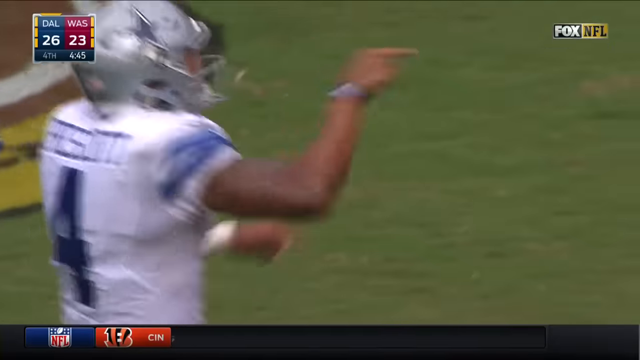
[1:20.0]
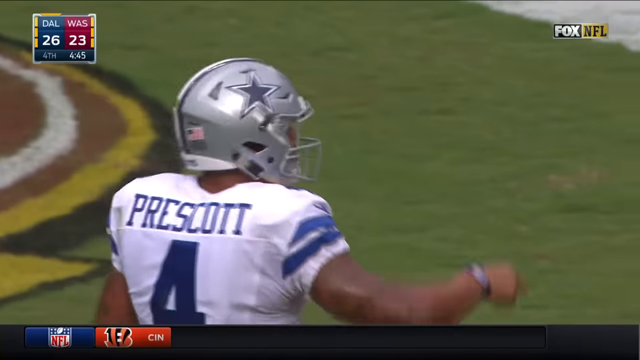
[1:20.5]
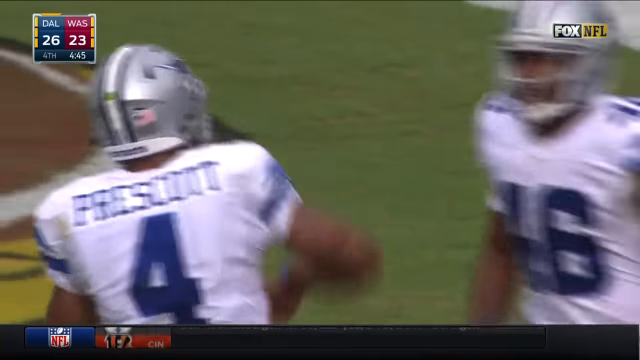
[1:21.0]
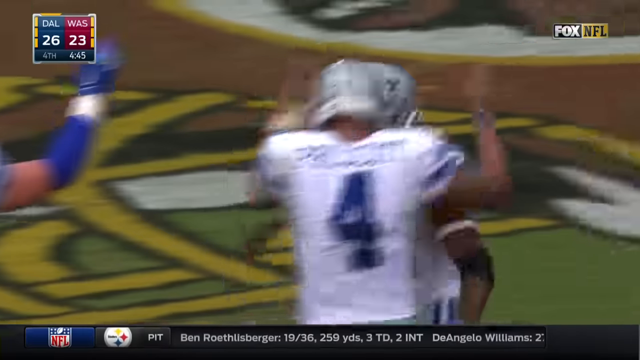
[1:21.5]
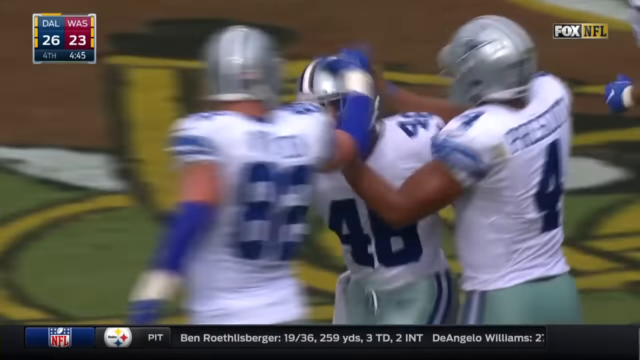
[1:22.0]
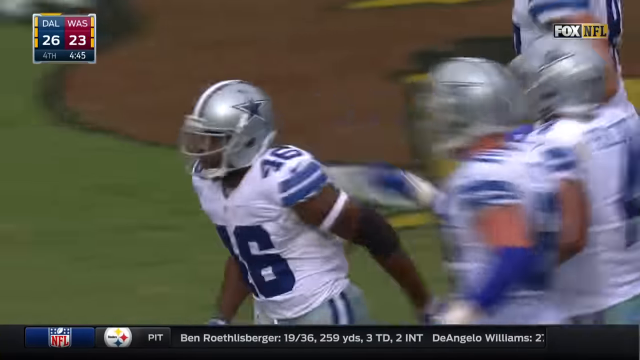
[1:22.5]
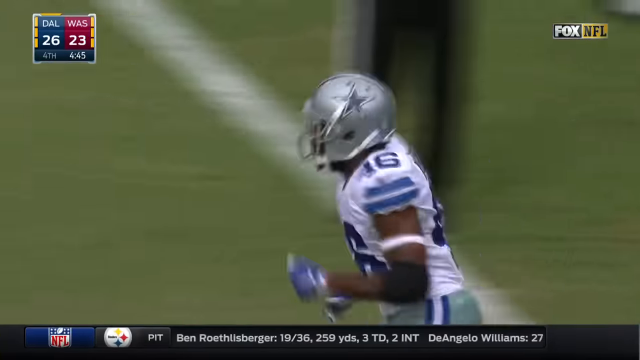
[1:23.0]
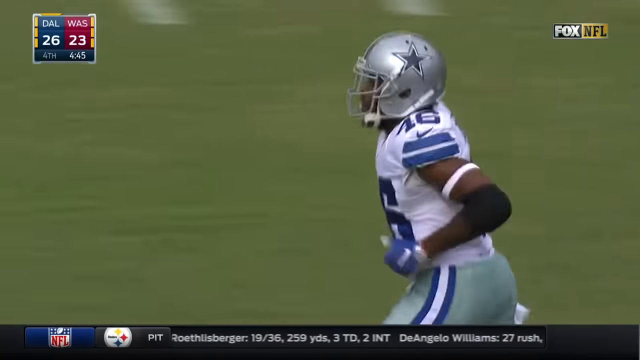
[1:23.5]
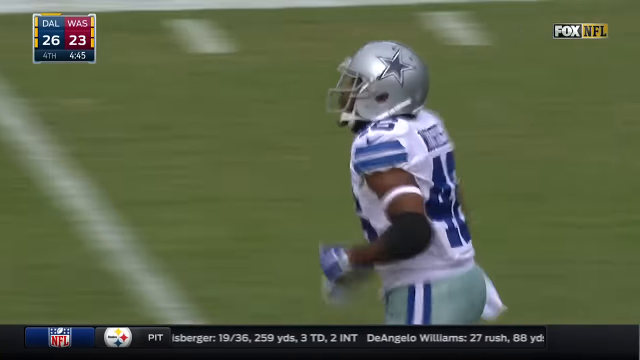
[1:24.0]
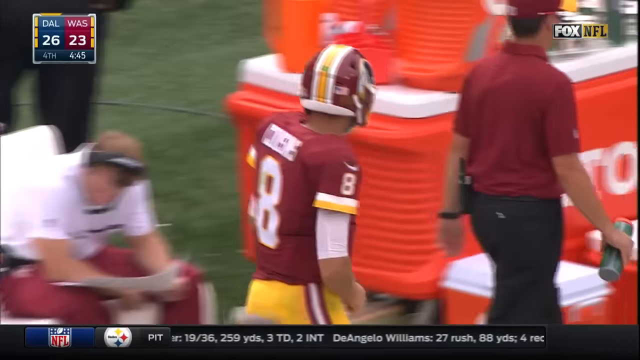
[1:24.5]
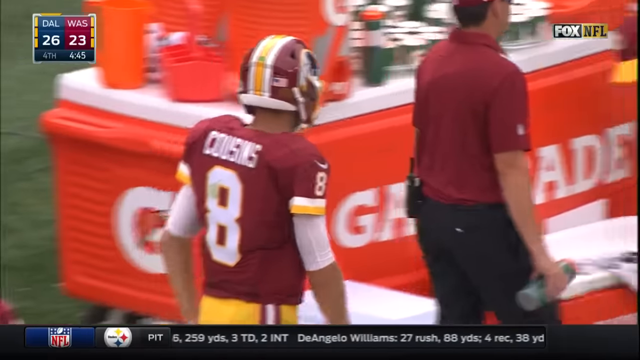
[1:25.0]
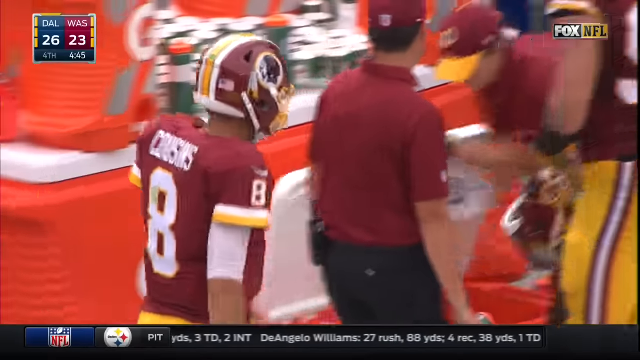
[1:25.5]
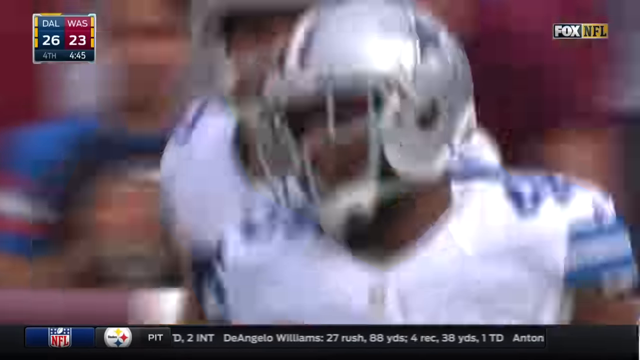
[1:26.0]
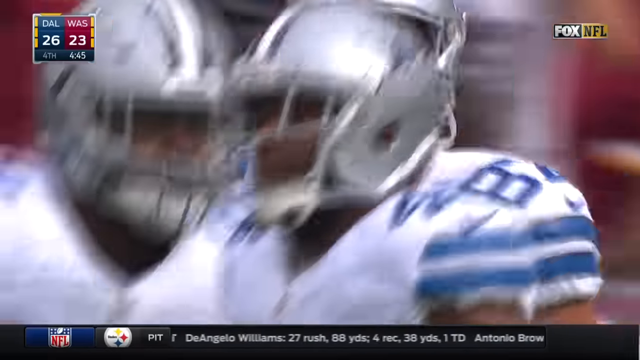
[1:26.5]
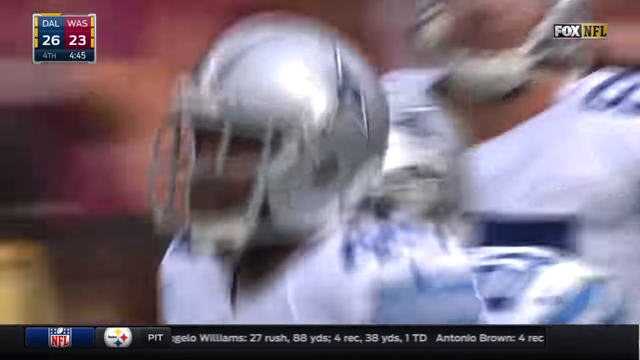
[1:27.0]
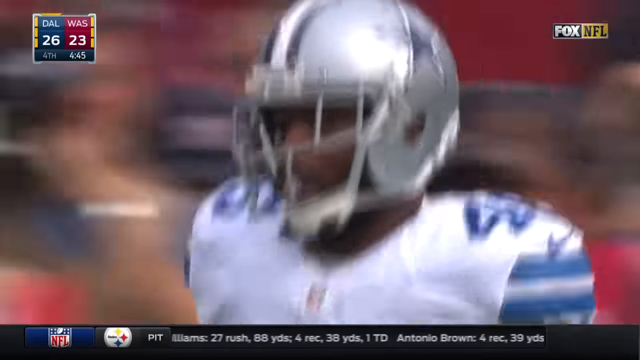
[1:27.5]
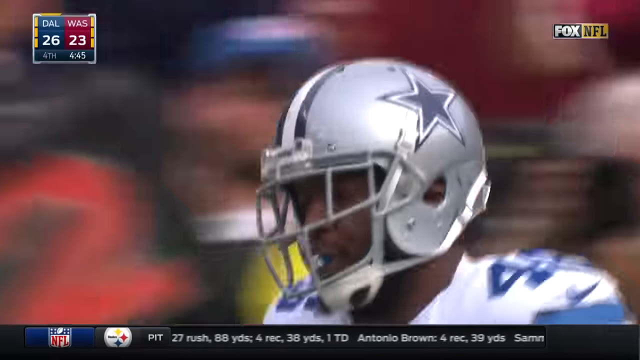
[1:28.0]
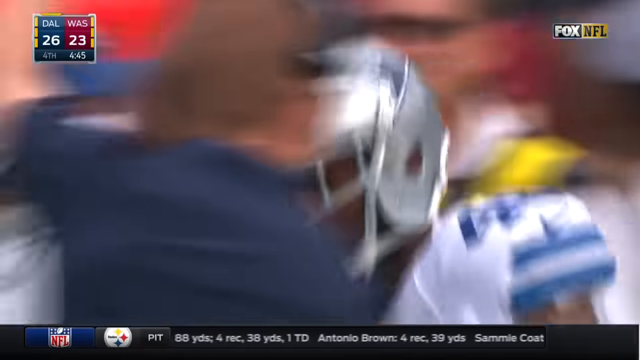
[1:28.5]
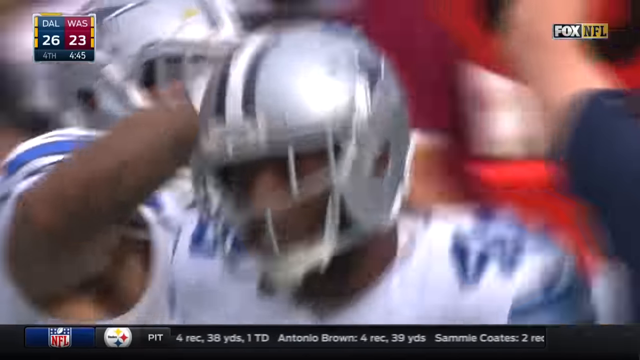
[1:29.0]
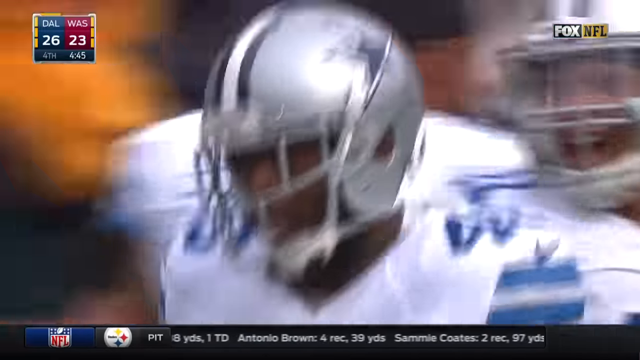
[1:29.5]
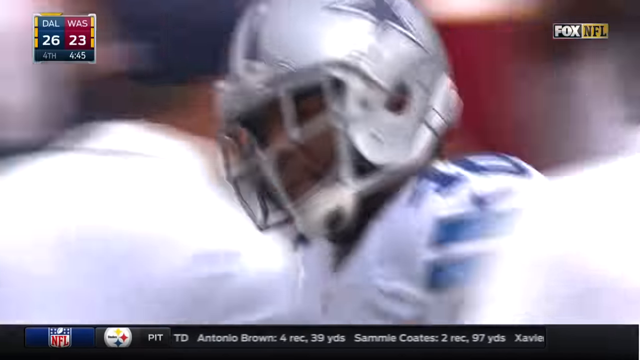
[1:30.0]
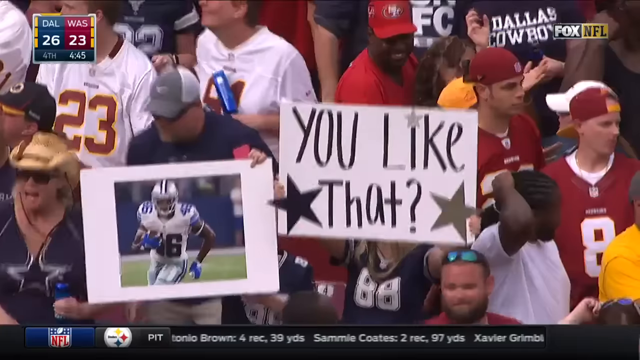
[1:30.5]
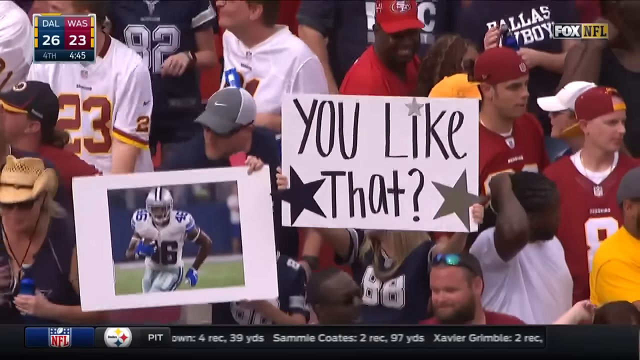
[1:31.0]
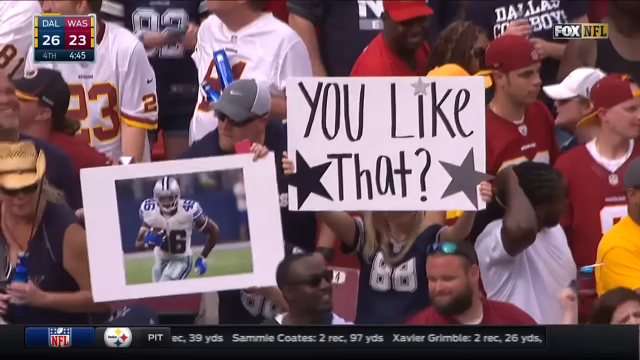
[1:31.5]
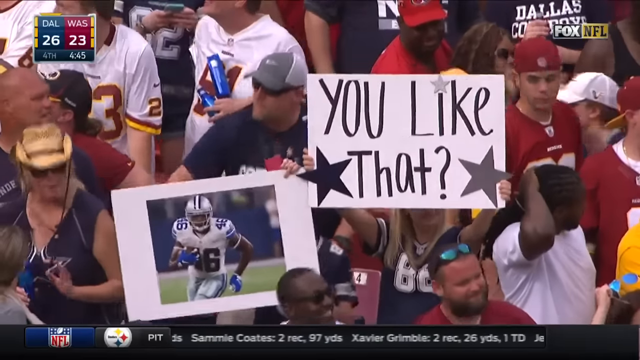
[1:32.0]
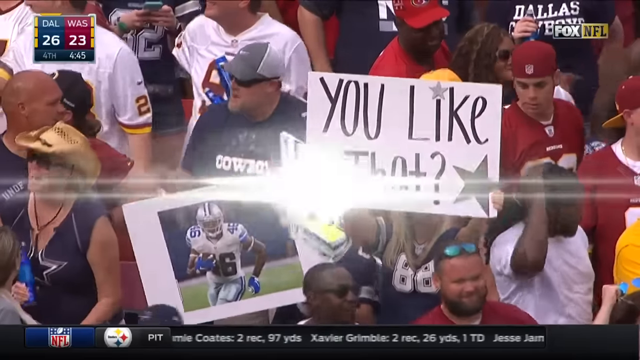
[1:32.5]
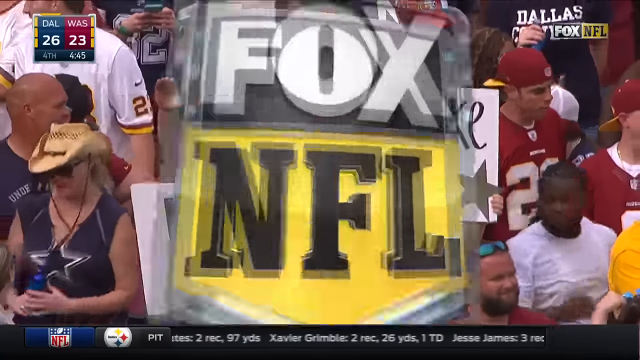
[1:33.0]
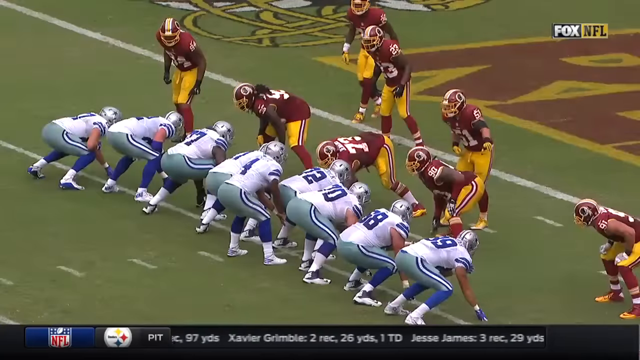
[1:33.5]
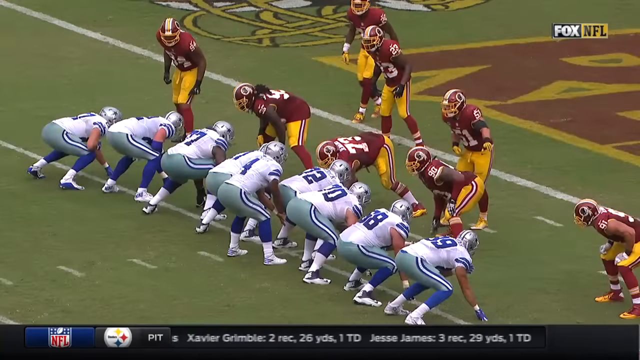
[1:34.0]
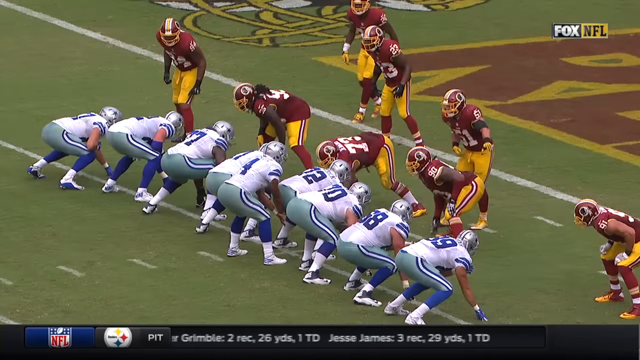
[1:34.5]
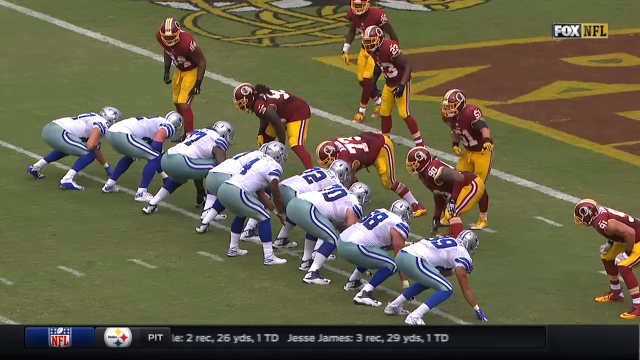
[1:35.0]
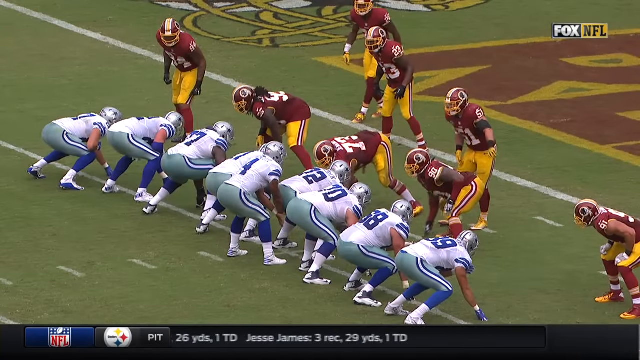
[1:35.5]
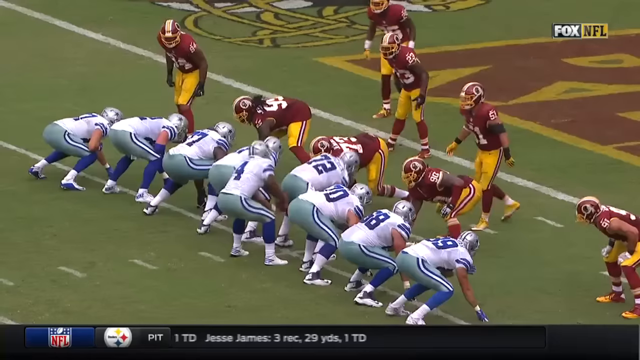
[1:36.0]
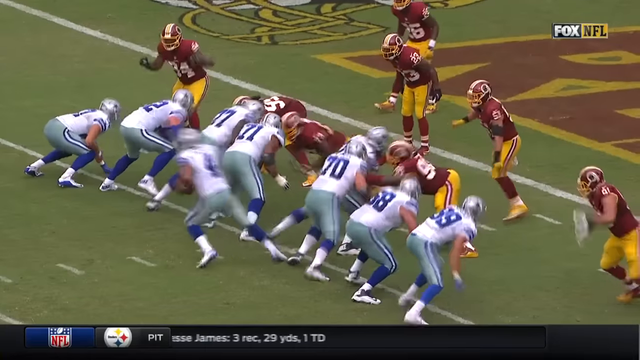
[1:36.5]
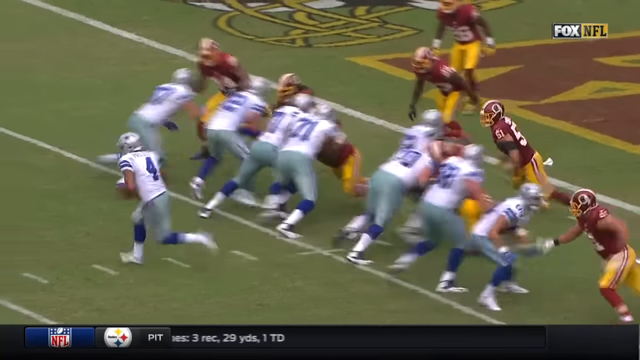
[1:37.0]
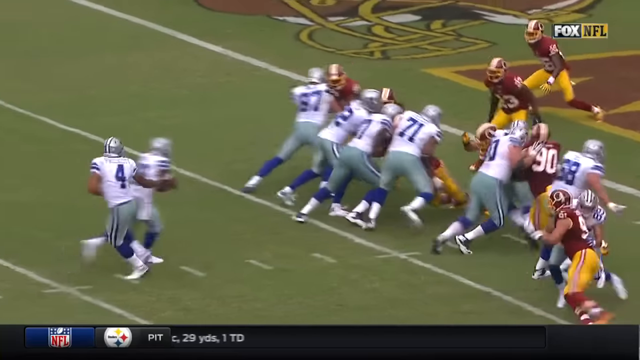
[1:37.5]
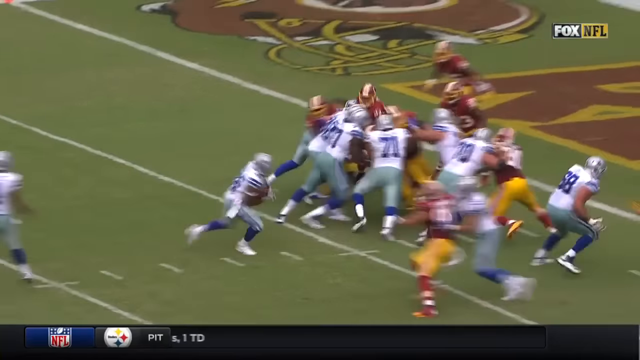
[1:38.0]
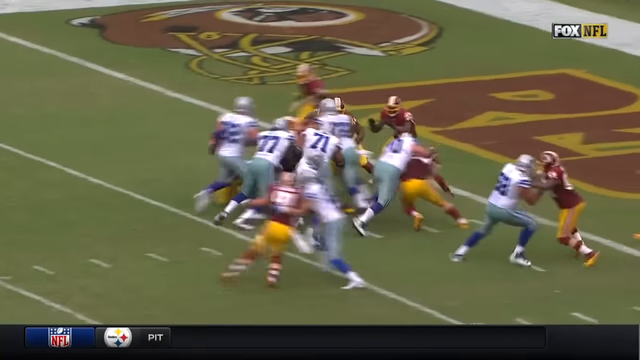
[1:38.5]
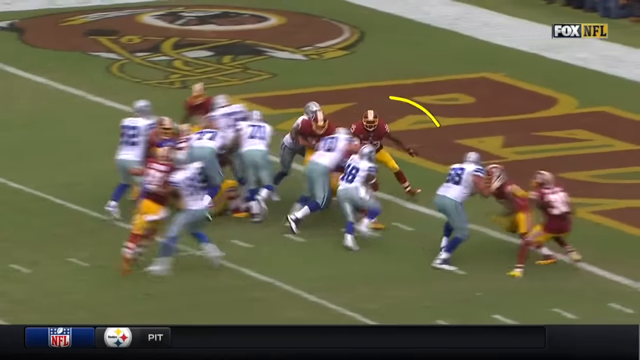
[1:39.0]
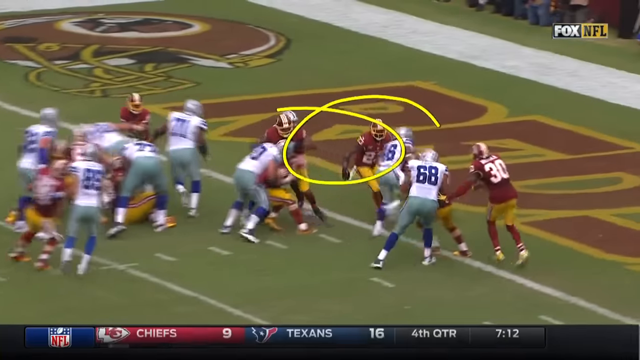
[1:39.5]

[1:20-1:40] Number four on the Dallas team is seen from behind, with "Prescott" on his back. He pumps his right fist. Another player runs in from the right side, and Prescott grabs him by the helmet with both hands, one on either side, and gives him a little shake, like a "good job". Two other players join them. The player whose helmet was grabbed is the one who scored the touchdown, number 46, and he runs off the field to the left. The shot cuts to him from the waist up, apparently joining his teammates on the sideline, who all congratulate him. It then cuts to the crowd, where a girl holds up a large white sign with two stars, one in the bottom right and one in the bottom left, and big black letters reading "you like that?". Someone next to her holds up a blown-up picture of number 46. The play is then shown in slow motion: the opposing Redskins let him through without even attempting to stop him.